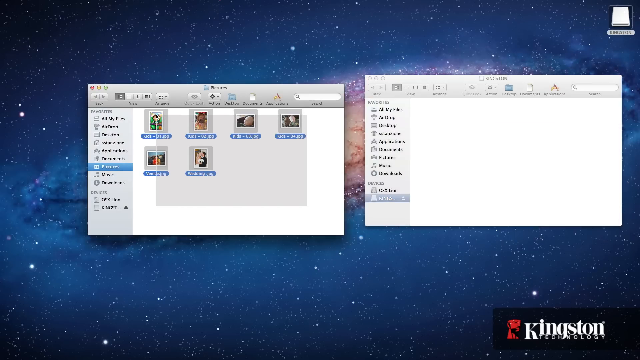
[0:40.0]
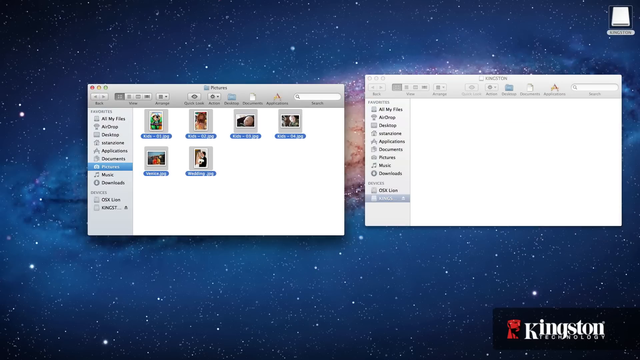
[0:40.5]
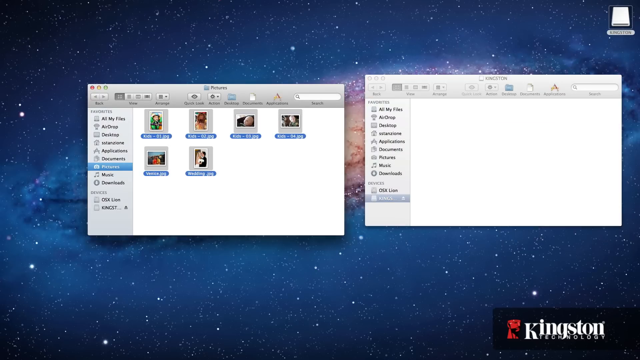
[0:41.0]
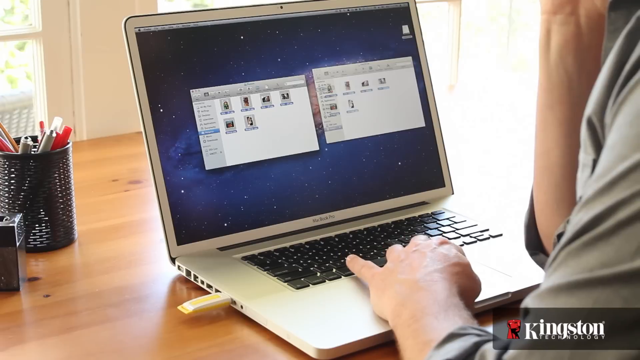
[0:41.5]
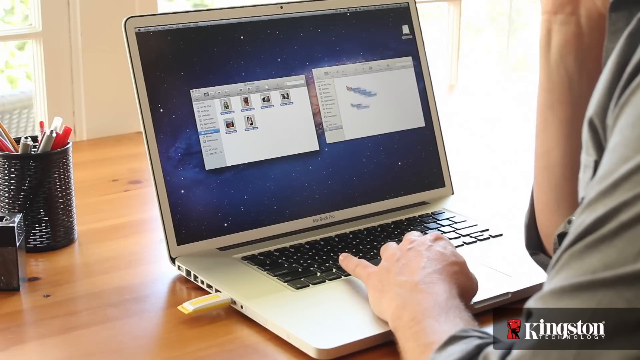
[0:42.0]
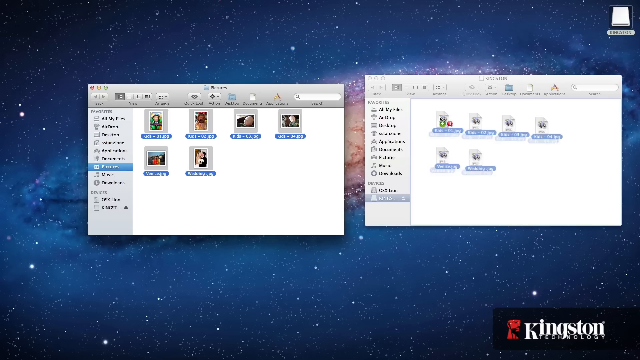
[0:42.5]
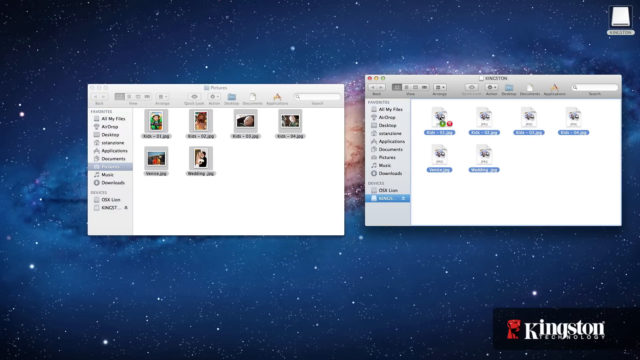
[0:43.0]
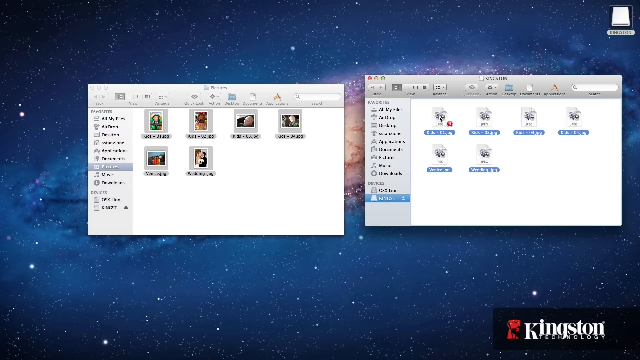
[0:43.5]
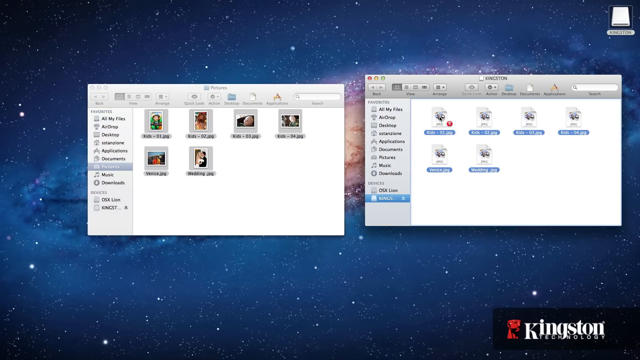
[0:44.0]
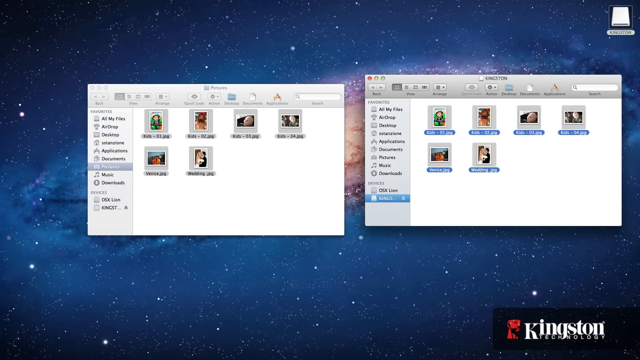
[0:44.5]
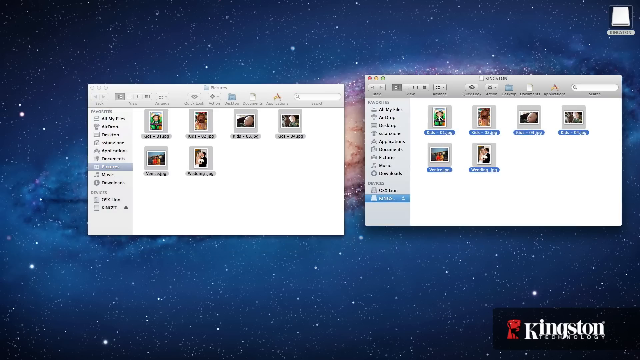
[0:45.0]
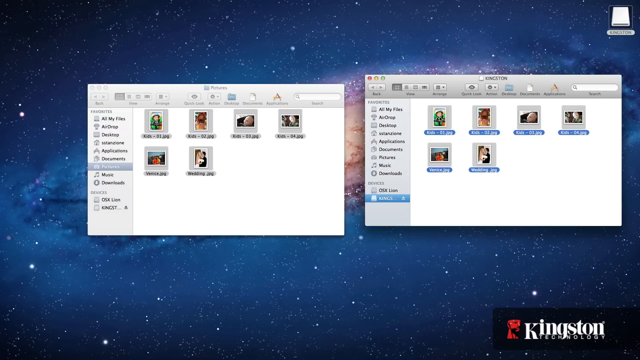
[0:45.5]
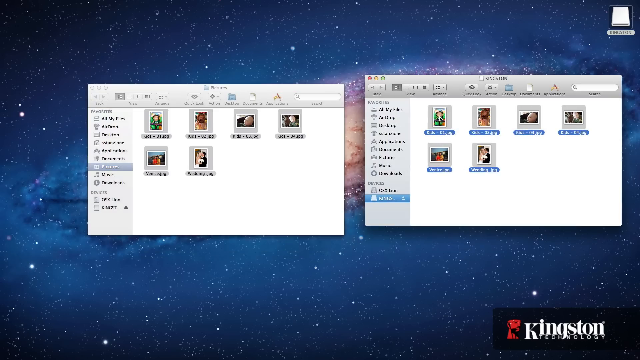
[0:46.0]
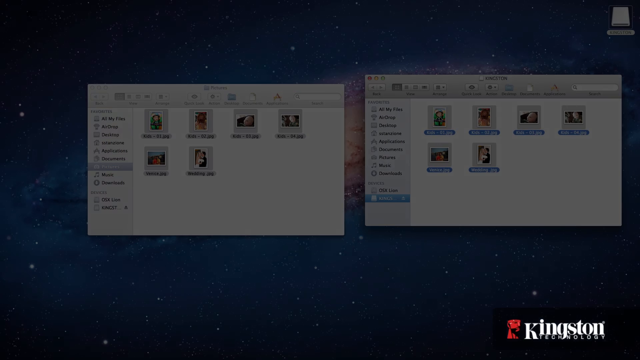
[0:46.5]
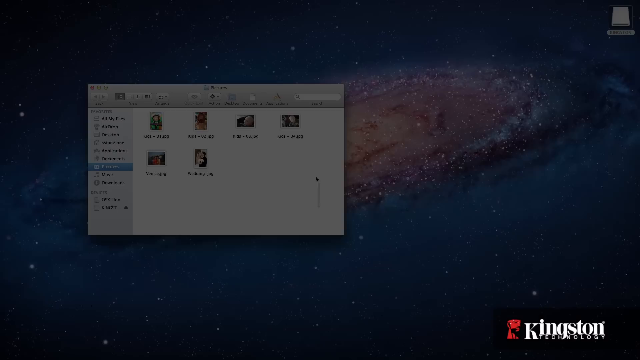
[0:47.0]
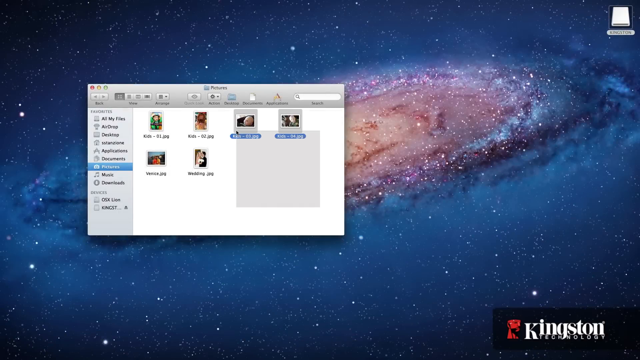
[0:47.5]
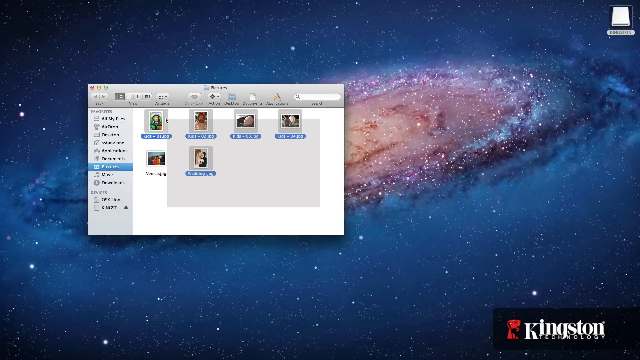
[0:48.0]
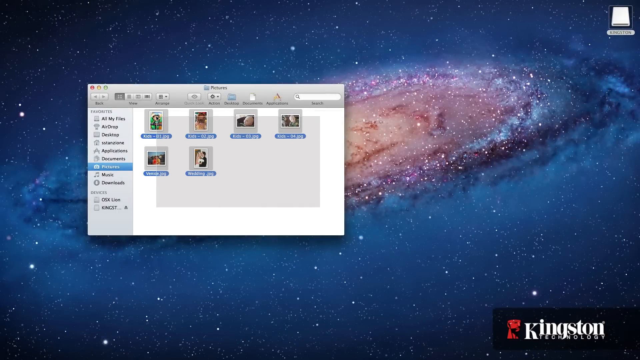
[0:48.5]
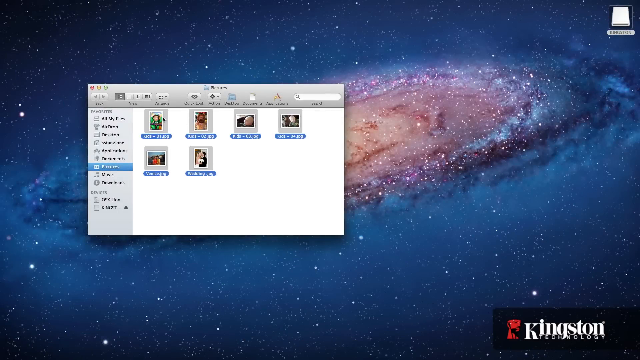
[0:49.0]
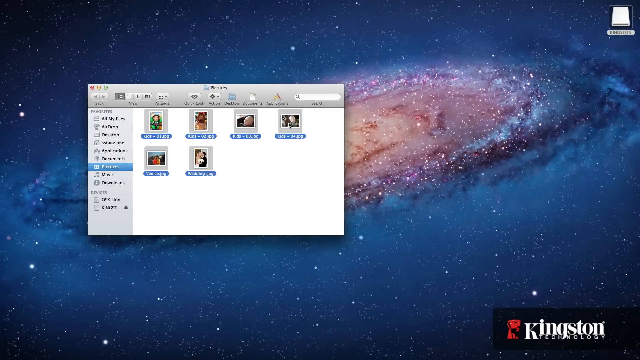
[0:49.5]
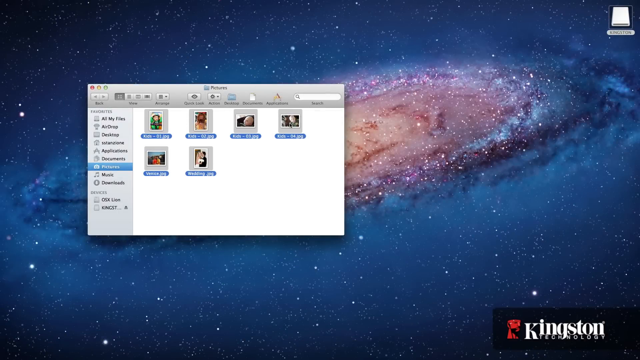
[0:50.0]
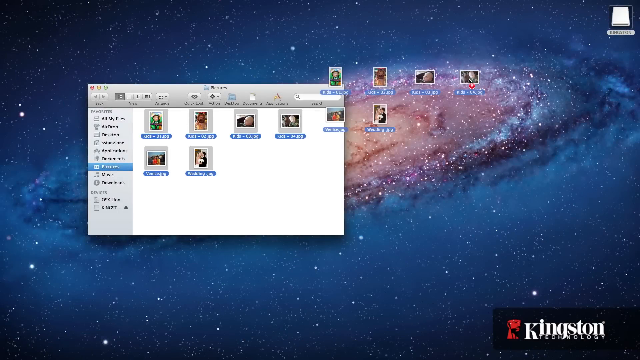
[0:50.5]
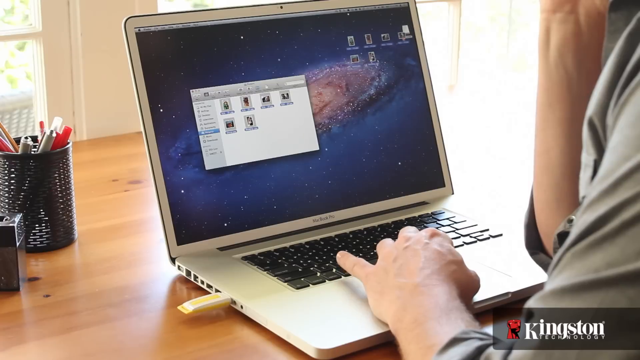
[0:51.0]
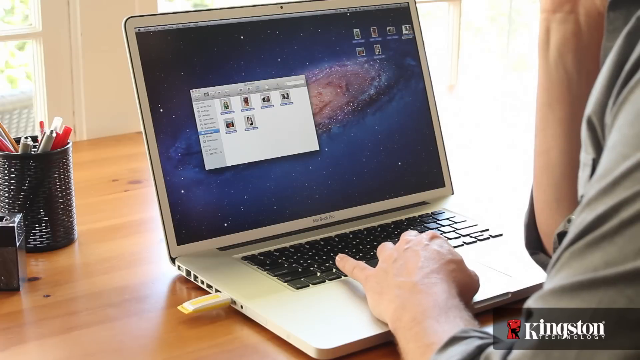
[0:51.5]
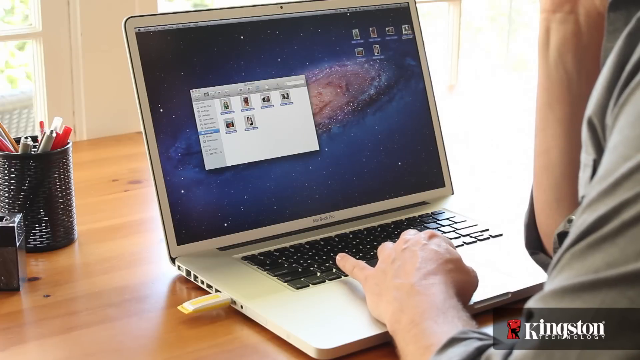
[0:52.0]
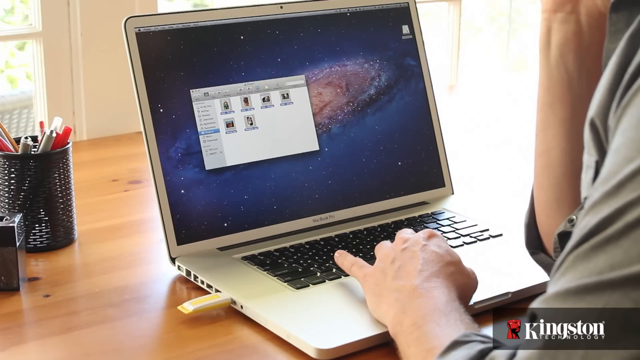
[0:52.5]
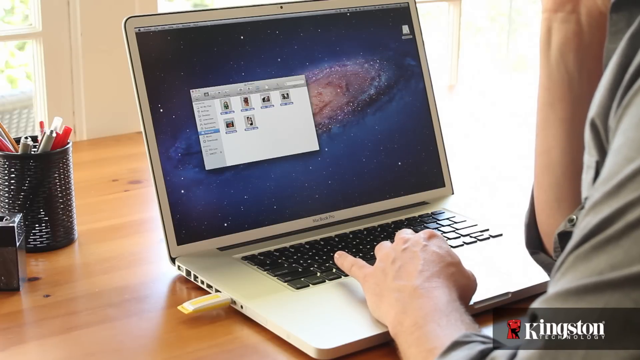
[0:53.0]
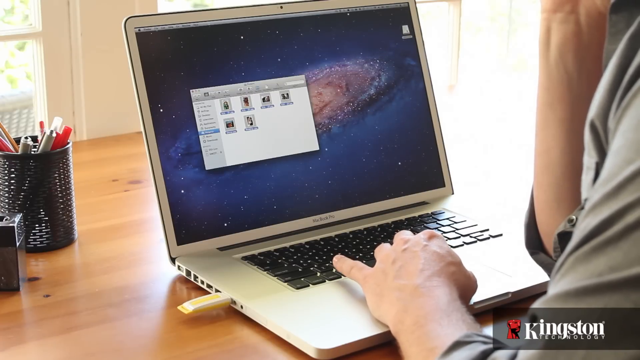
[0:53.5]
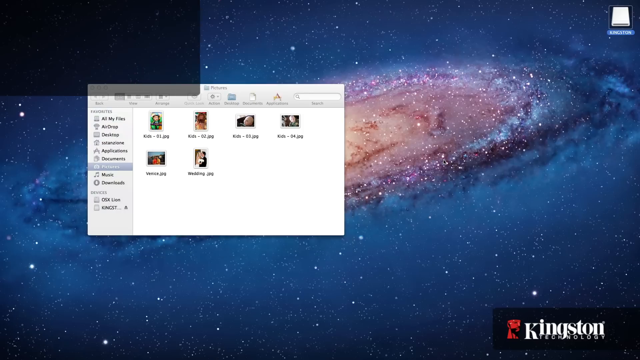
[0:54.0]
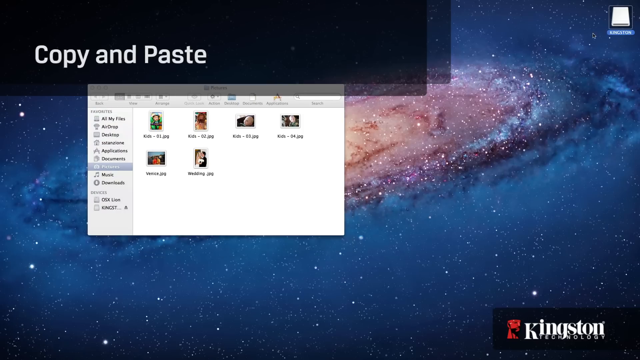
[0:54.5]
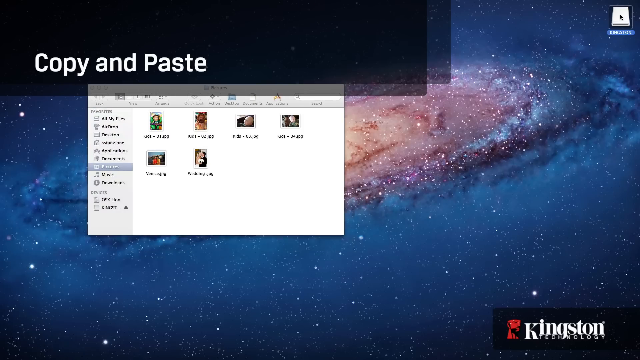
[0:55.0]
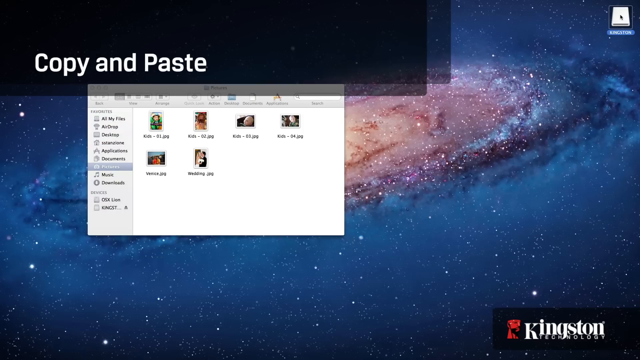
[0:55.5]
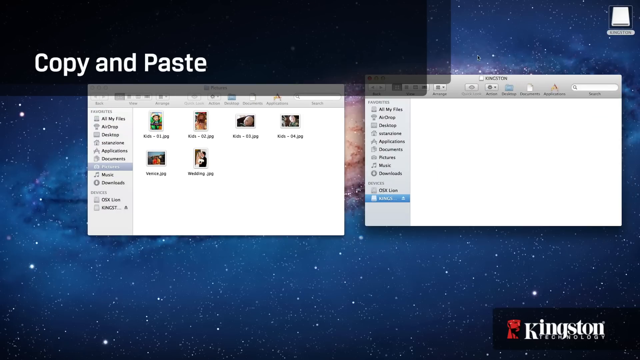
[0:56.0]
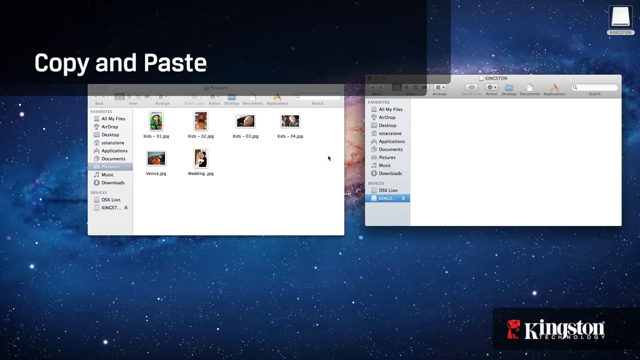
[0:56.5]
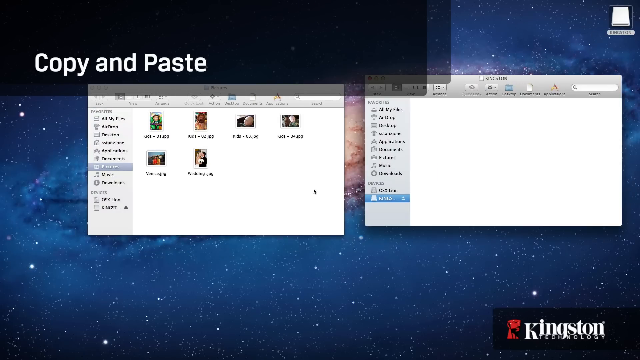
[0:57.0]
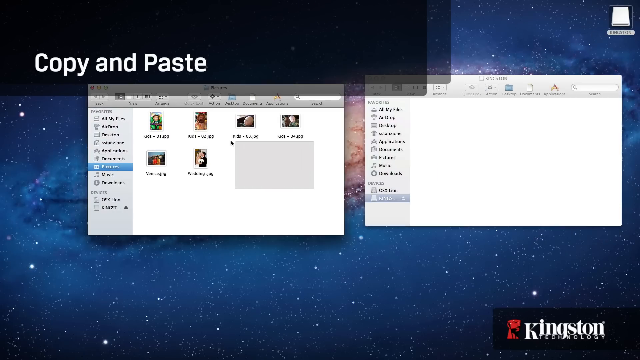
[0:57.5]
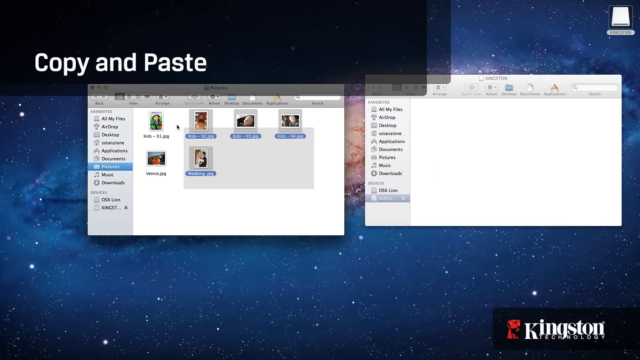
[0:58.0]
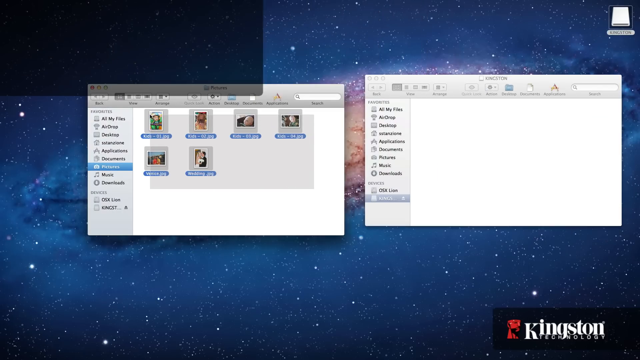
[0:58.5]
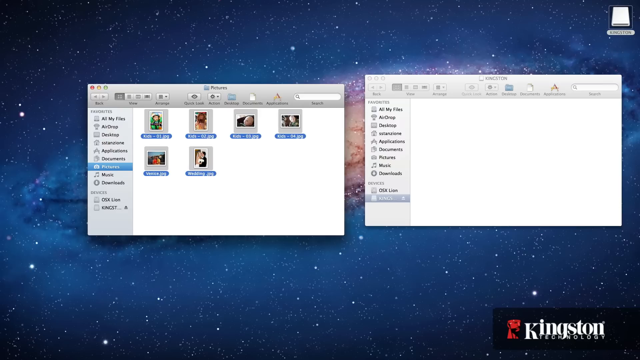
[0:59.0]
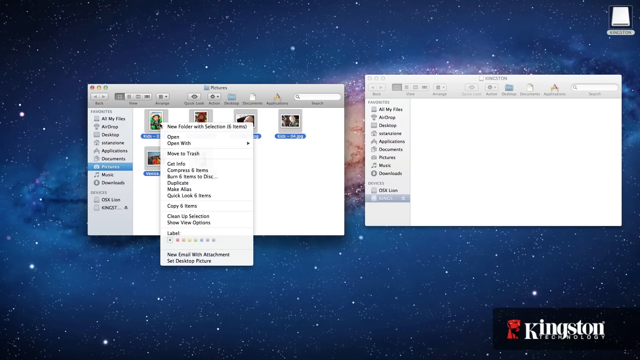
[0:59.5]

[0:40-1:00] The screen is being recorded, showing a photo section open in a pop-up. All of the files and pictures have been copied and moved over to a blank USB. The person clicks on them and drags, and "copy and paste" appears in white letters at the top of a box in the upper left-hand corner of the page. A gray box pops up over the highlighted area, and on the right they configure it, copying, pasting and moving everything over; they also drag the items onto the blank area for the USB.